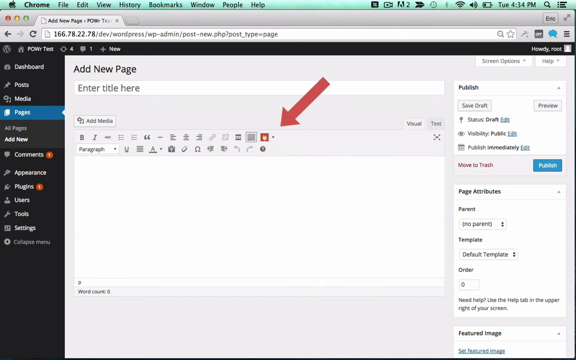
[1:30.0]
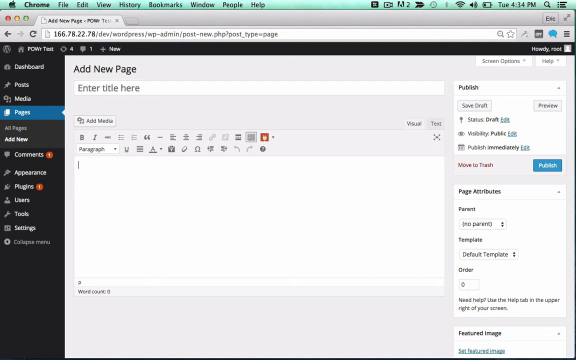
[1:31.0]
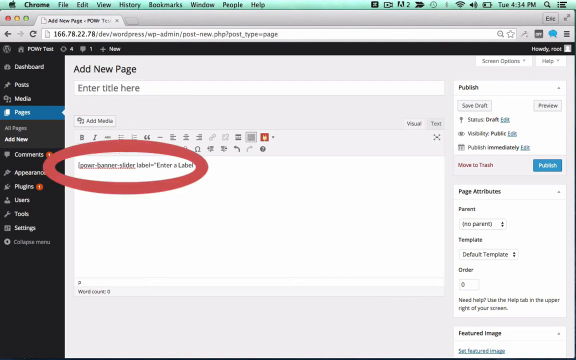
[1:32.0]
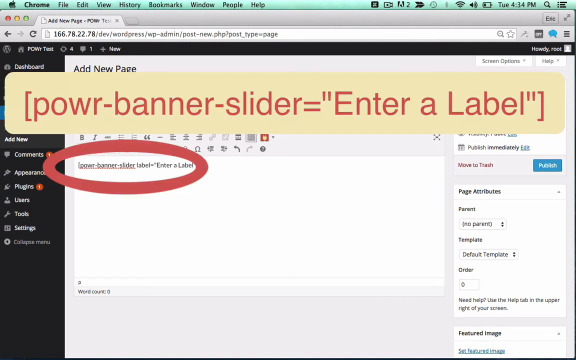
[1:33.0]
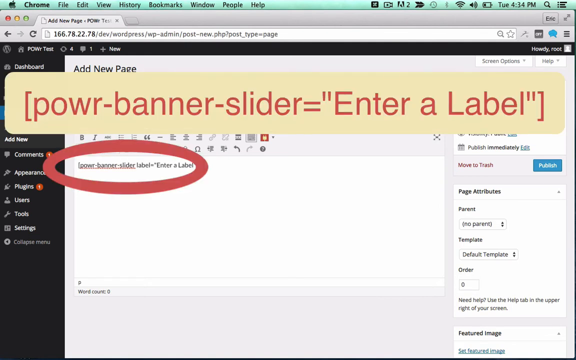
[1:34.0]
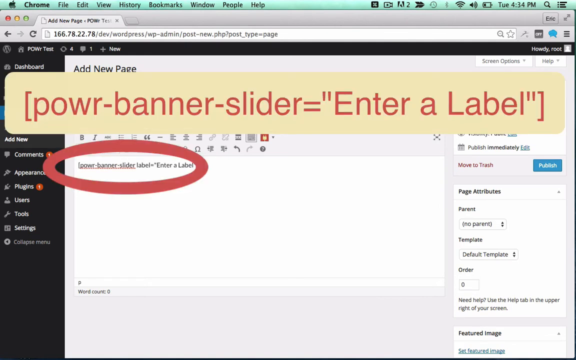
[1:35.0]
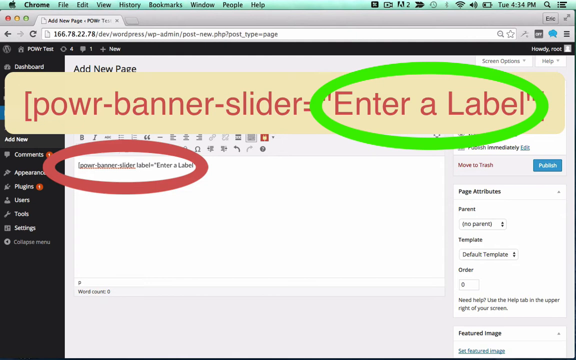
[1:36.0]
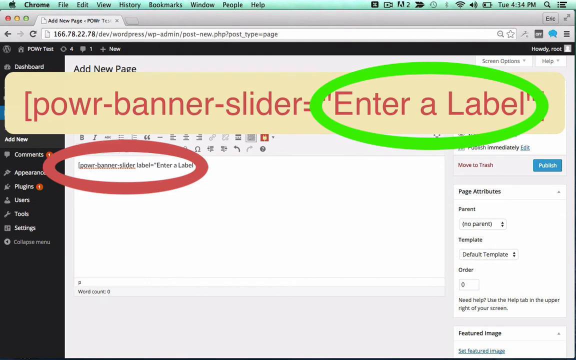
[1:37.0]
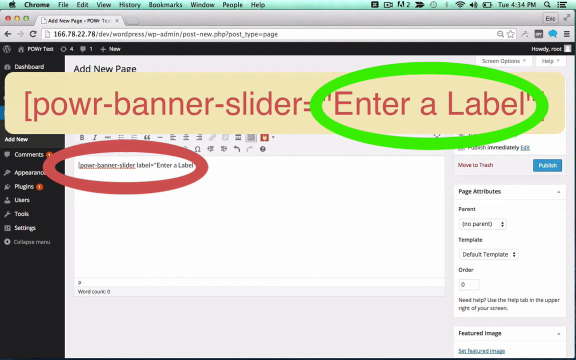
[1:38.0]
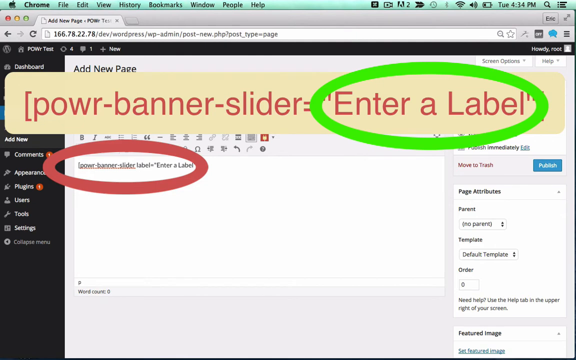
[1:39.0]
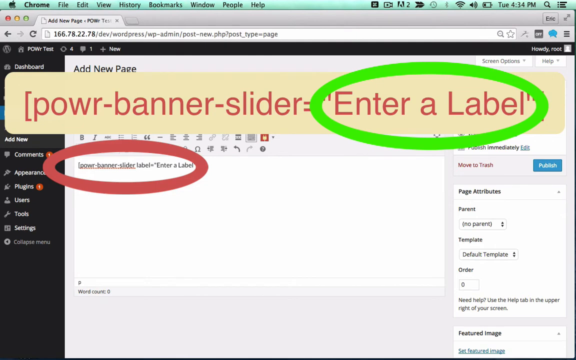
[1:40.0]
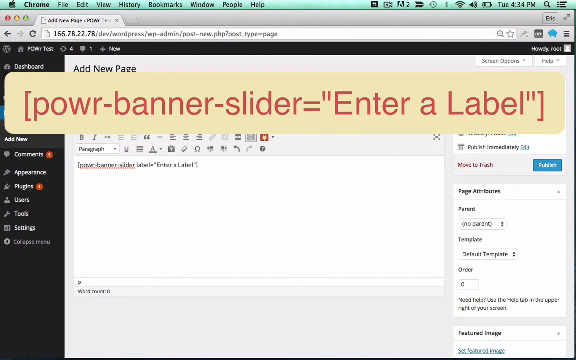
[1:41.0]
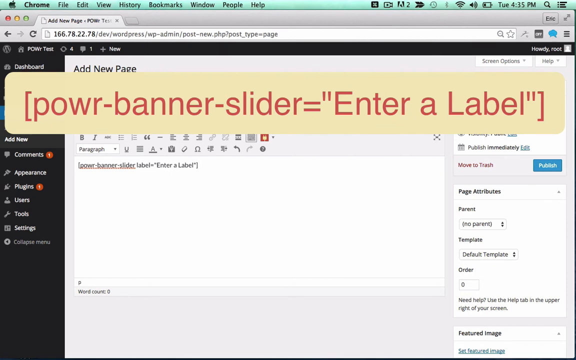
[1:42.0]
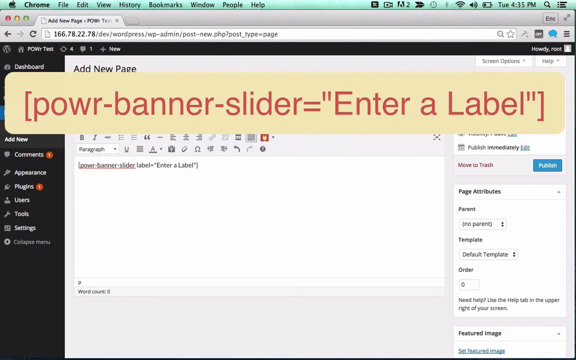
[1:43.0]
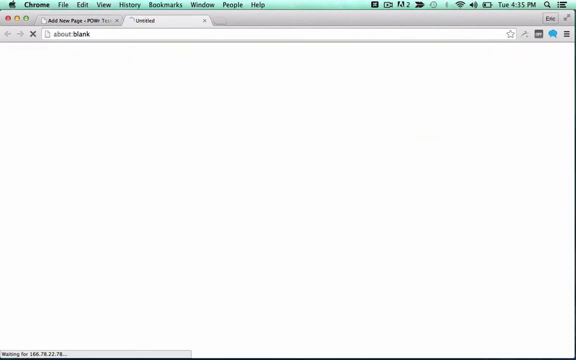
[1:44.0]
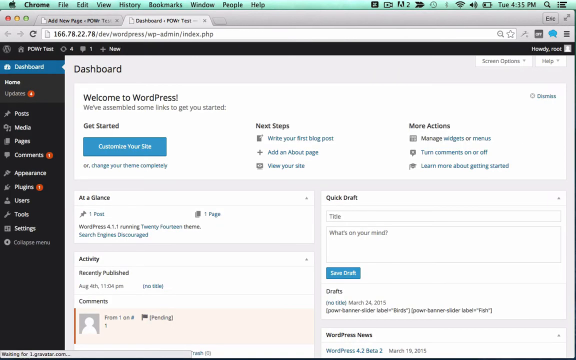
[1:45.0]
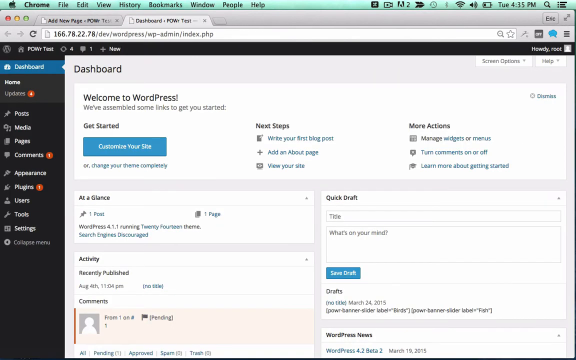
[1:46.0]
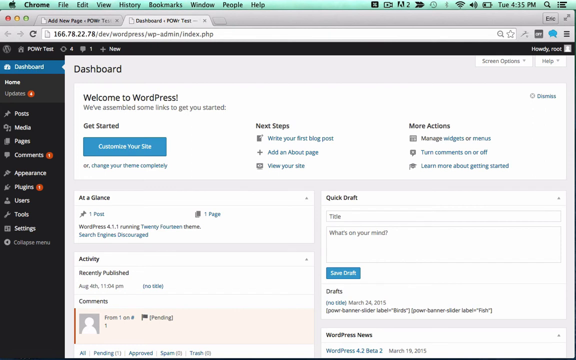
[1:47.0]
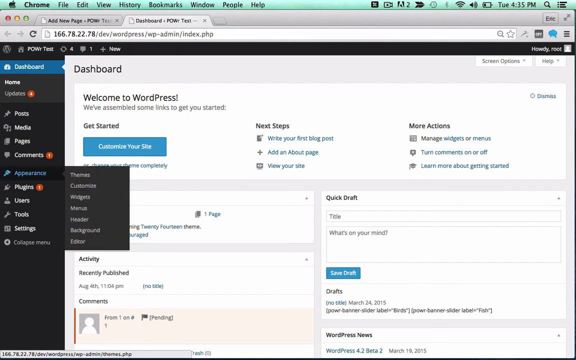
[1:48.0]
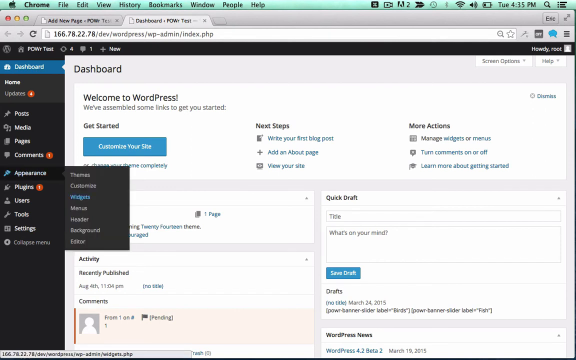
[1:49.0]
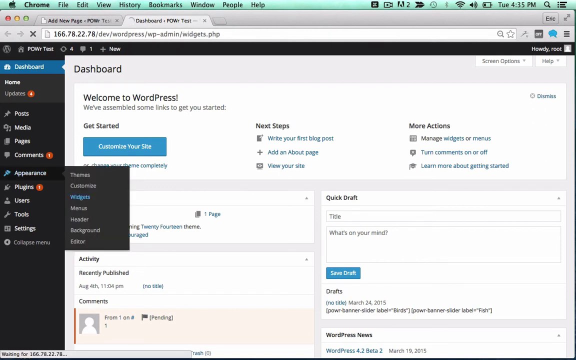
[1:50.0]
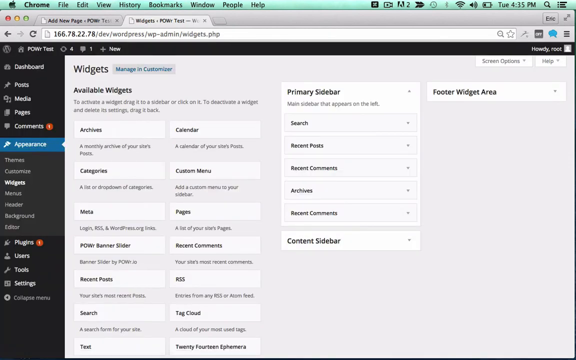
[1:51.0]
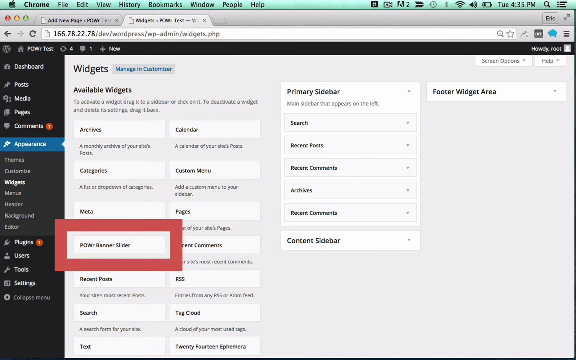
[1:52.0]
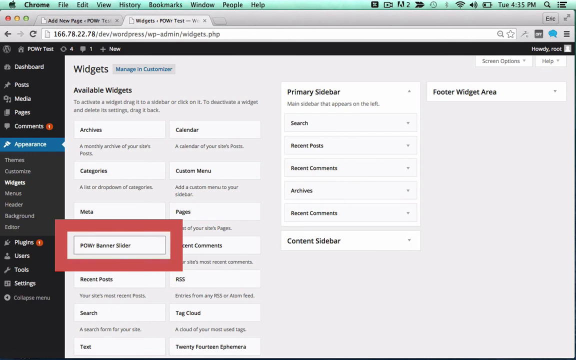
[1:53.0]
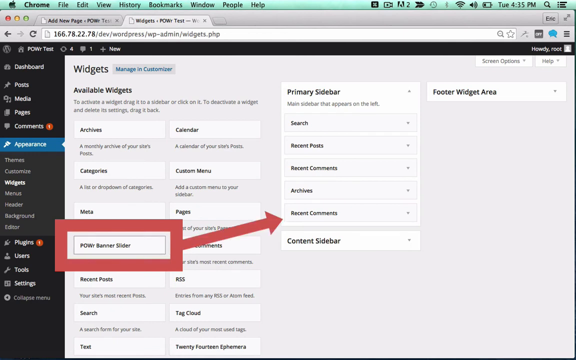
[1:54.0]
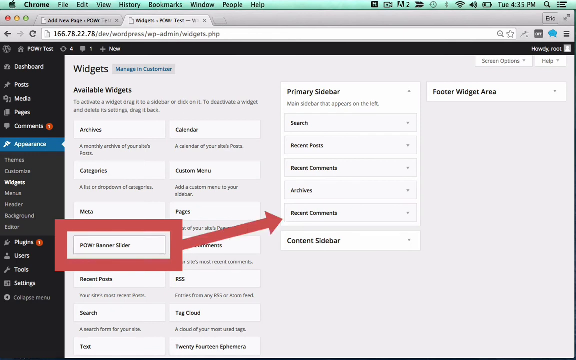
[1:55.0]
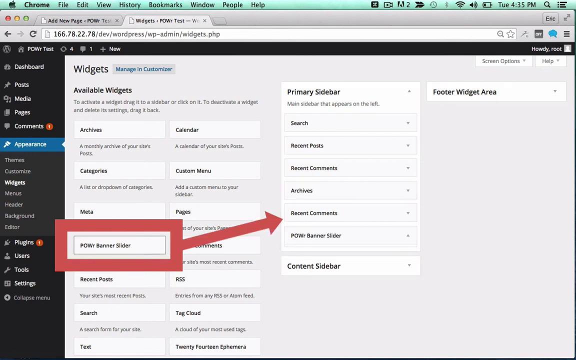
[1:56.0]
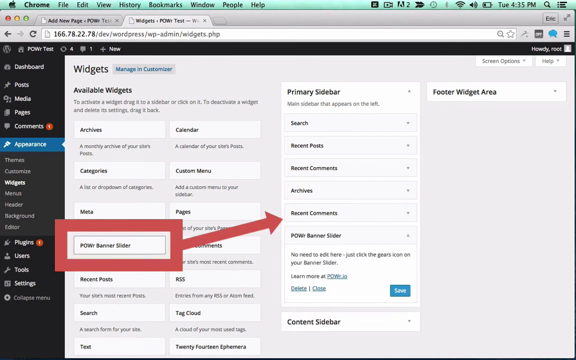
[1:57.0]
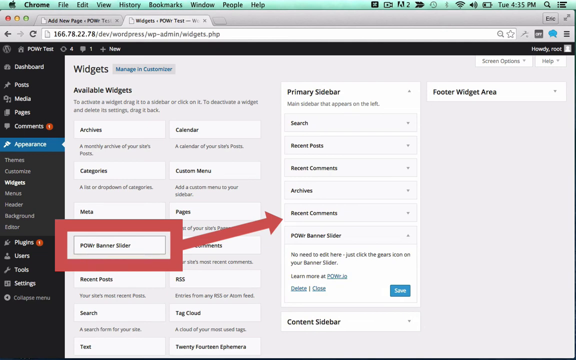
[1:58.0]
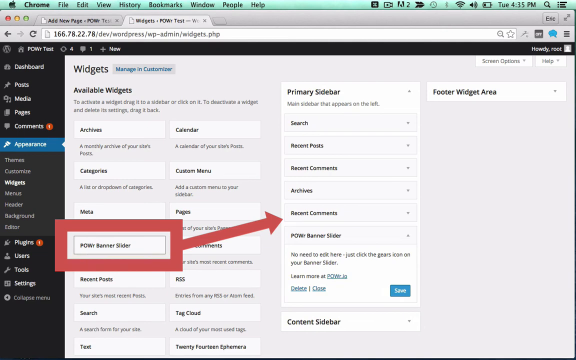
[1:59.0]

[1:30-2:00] A computer screen shows an open box that says "add new page". A red arrow points down to a red box that looks like it has a tulip inside. They click on a spot that says "power-banner-slider=enter a label", which is circled with a red oval, while "enter a label" at the top is circled with a bright green oval line. They then go to the side menu, click on "dashboard", and slide down to a box that has popped up listing "themes", "customize", "widgets", "header", "background", and "editor". They kind of slide down and click on the widget section, where a box surrounds "power-banner-slider", and an arrow points from it up to "recent comments". The arrow is then moved.